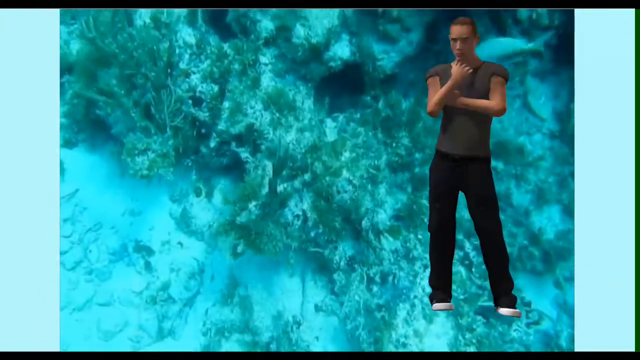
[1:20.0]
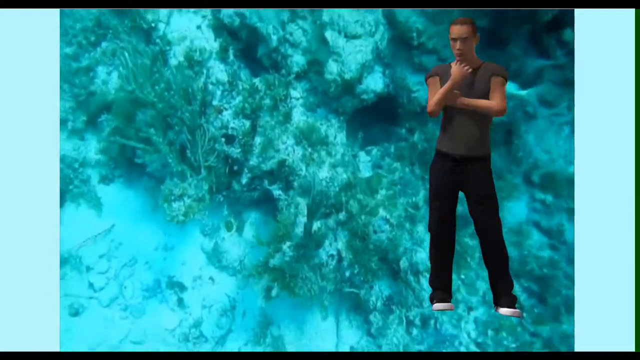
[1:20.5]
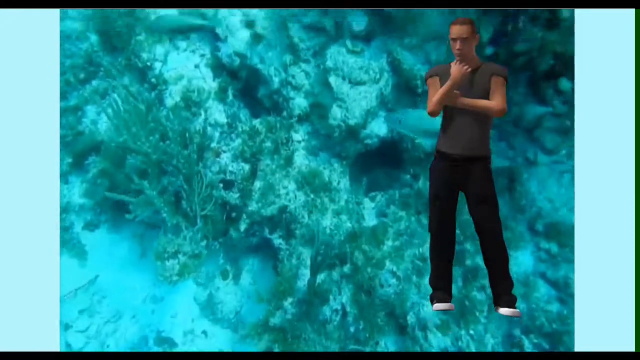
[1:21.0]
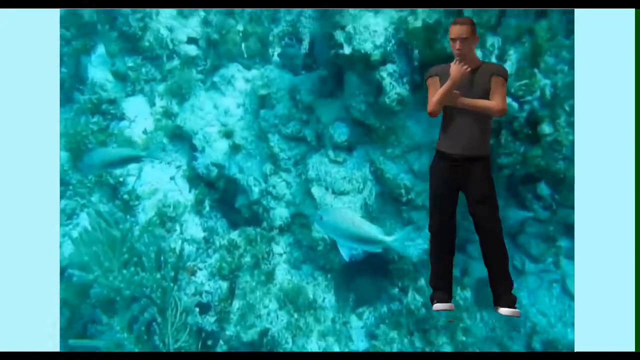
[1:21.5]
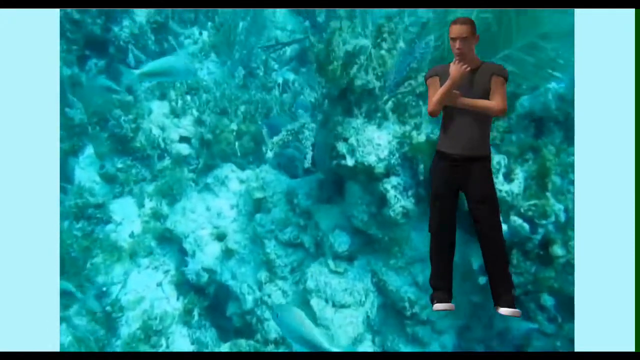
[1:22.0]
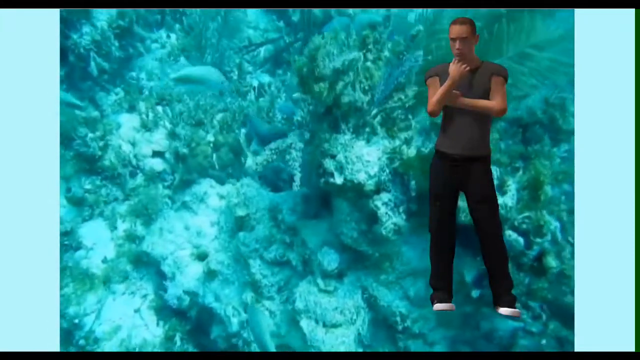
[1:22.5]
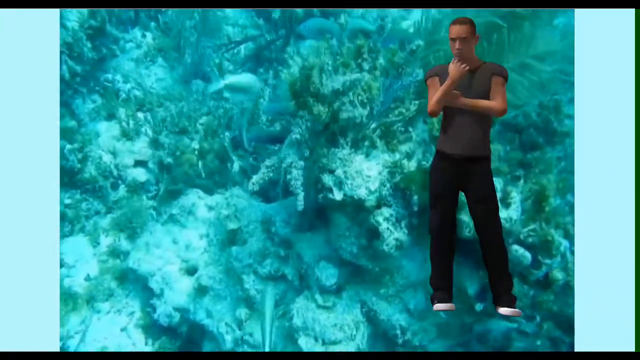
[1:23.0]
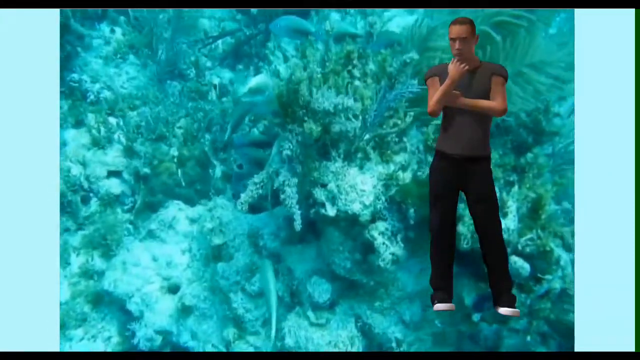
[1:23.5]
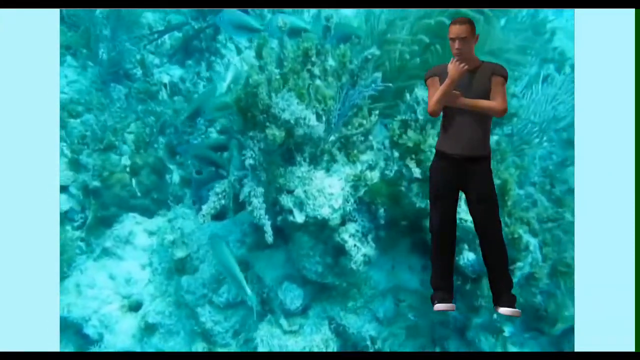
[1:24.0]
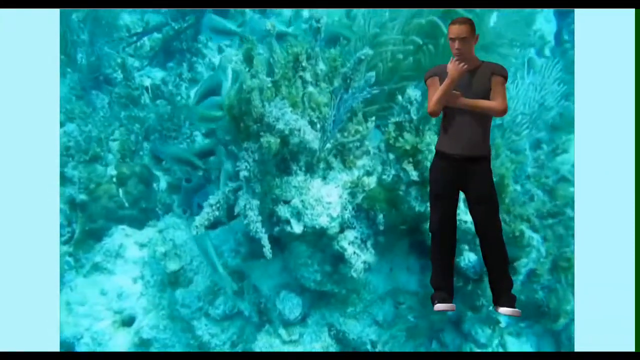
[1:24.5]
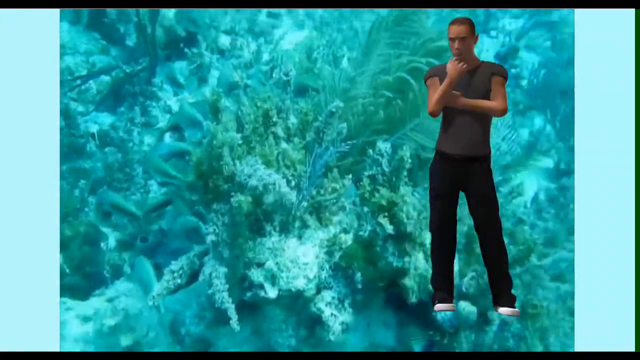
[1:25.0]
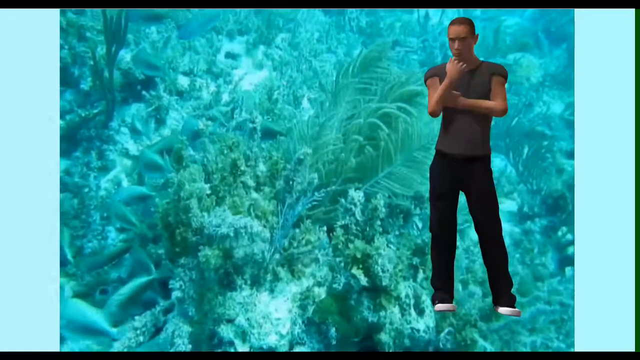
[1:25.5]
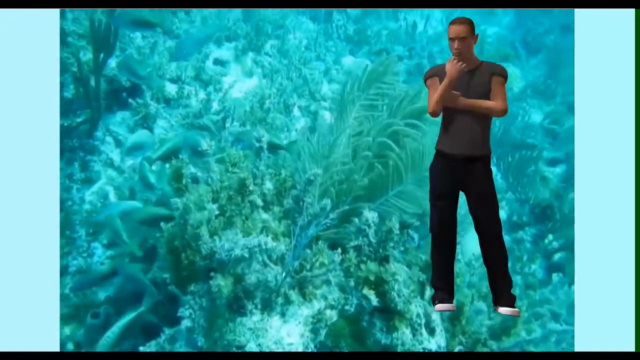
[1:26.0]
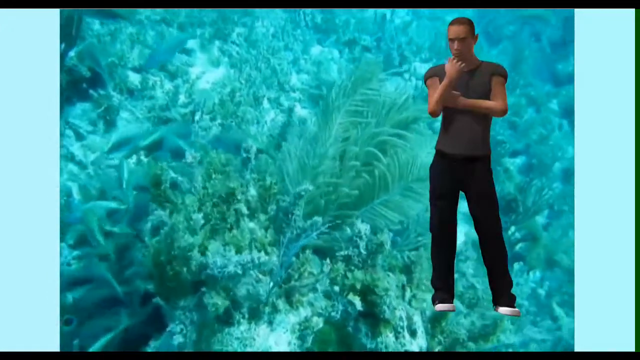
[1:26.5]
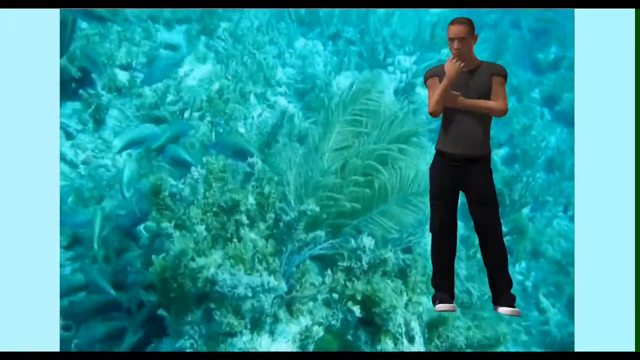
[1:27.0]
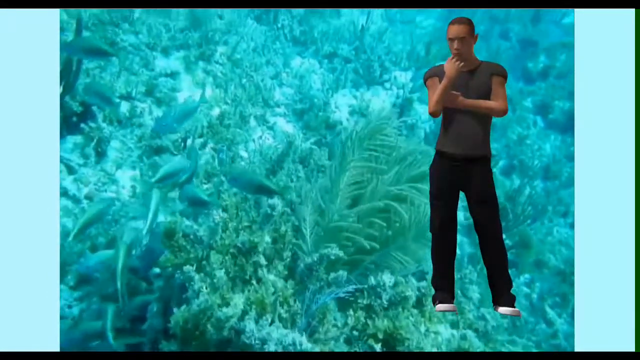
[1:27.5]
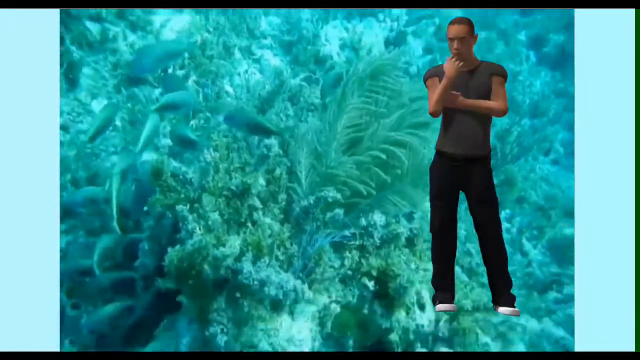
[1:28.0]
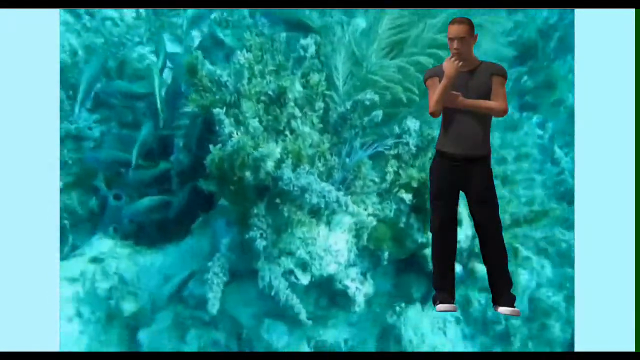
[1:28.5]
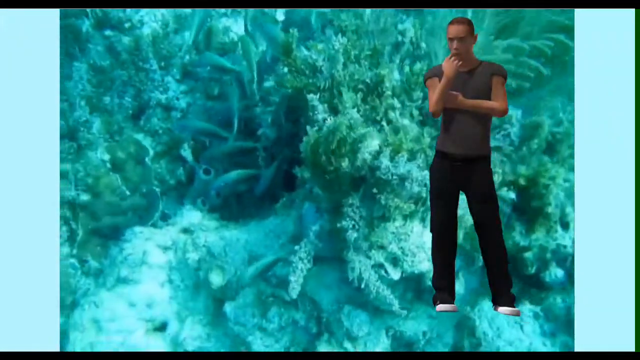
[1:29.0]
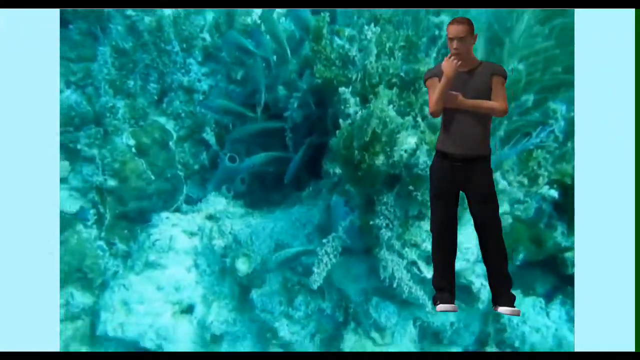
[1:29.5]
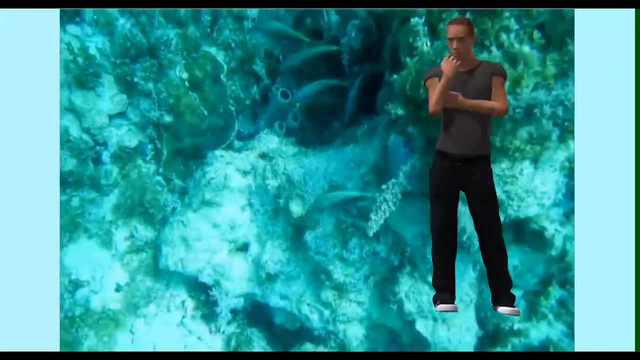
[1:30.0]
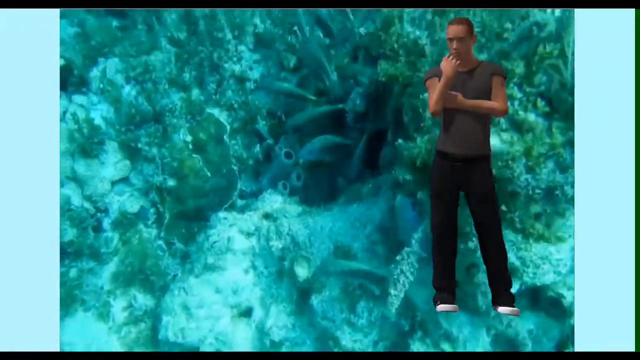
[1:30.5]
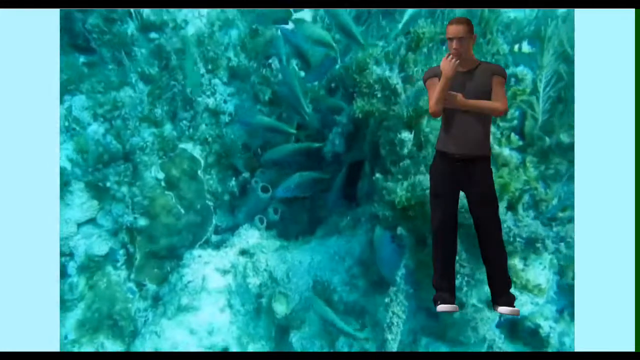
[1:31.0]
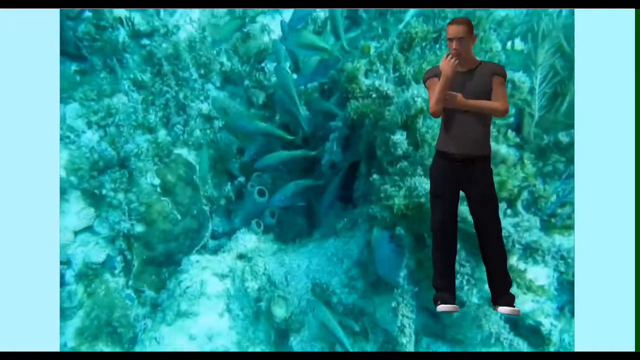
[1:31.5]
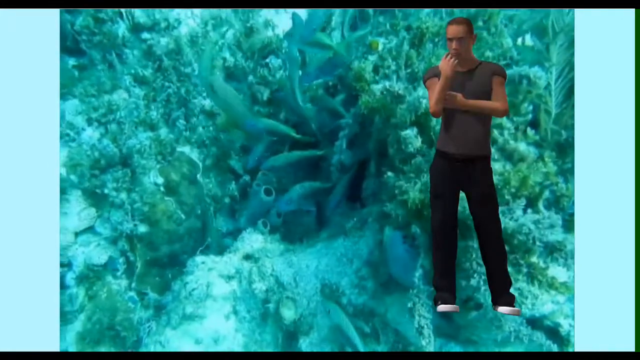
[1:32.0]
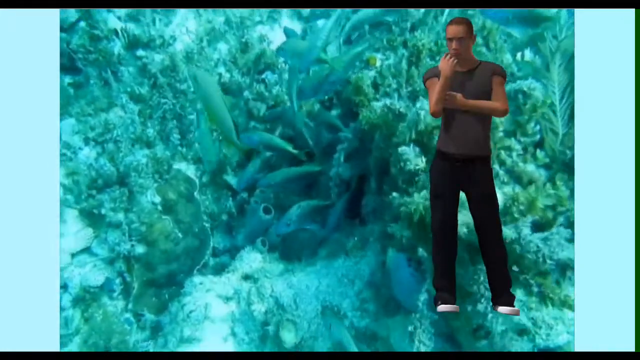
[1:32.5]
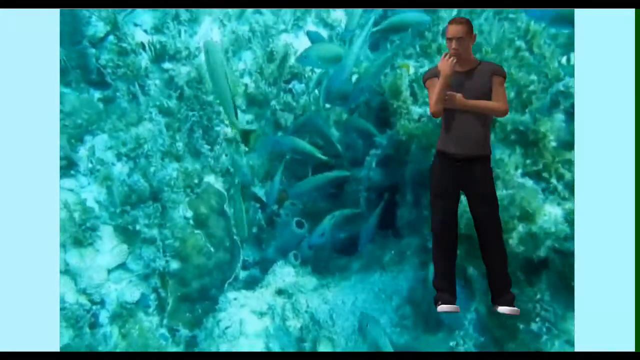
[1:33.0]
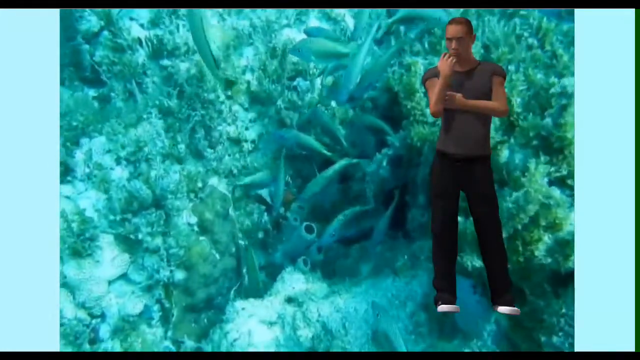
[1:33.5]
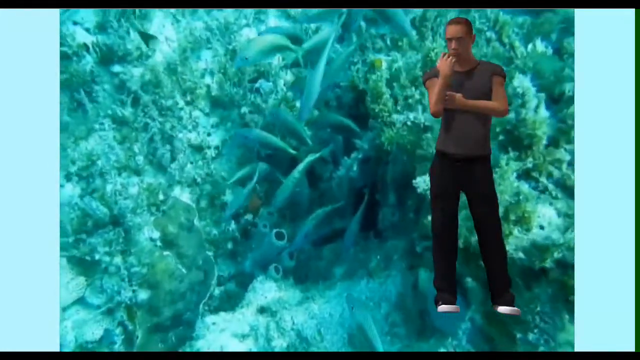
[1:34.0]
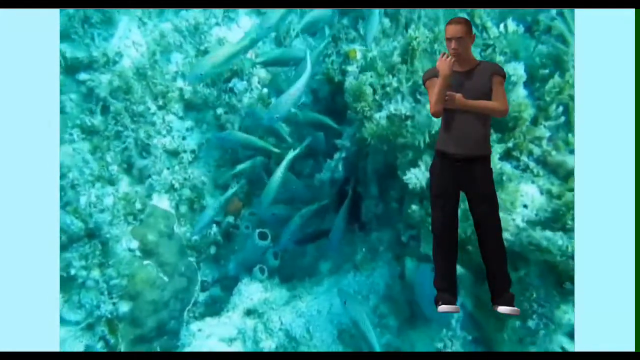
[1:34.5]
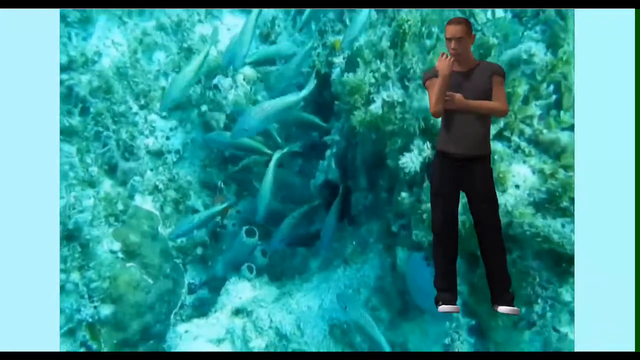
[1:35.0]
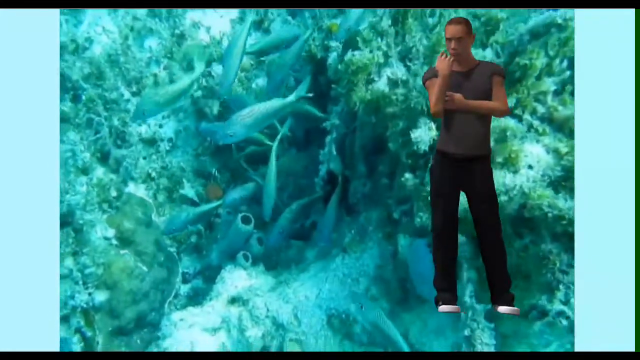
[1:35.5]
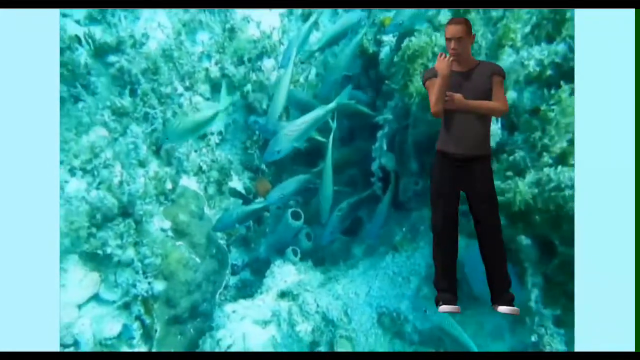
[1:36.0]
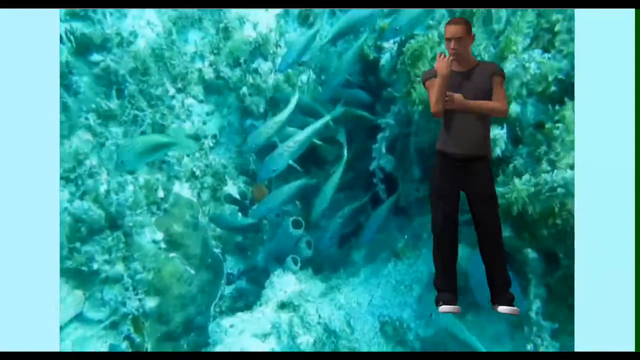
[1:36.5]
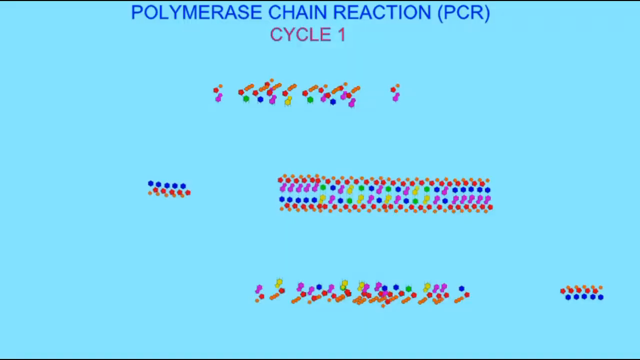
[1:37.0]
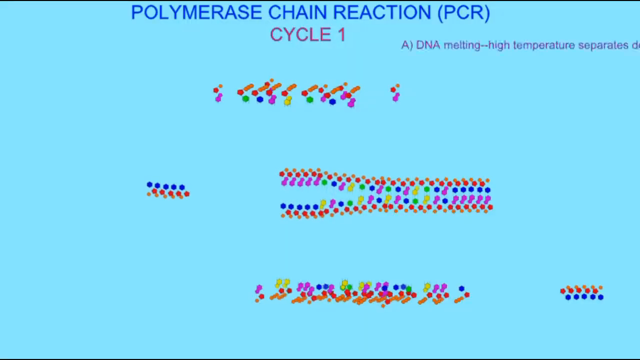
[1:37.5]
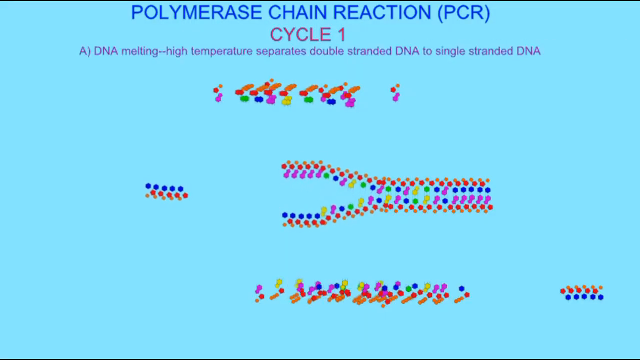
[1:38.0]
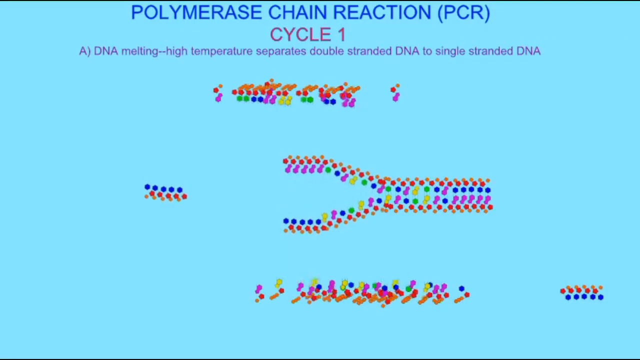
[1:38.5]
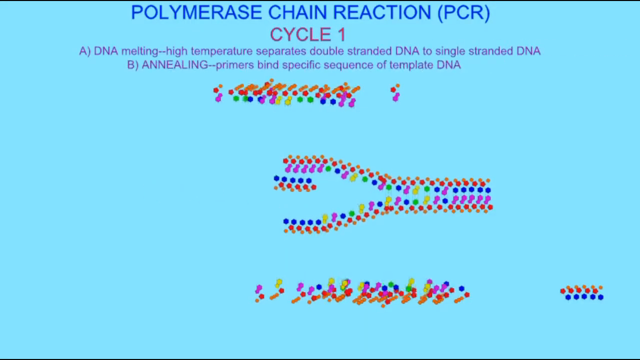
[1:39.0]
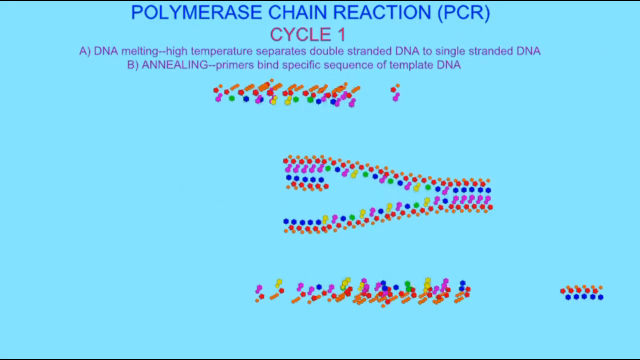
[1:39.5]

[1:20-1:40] A video of underwater fish and vegetation has an animated figure of an adult male superimposed on it. He is on the right-hand side of the screen, with his feet near the bottom and his head near the top. He wears long black pants and a short-sleeved gray shirt, has very short brown hair, and looks to have white sneakers on. His left arm is across his chest and his right arm is bent up so that his hand and fingers are near his mouth. The vegetation under the water looks like algae or weeds, with some light green colors as well as some very murky, washed-out greens. A lot of very thin fish swim in a big group near the middle of the screen among the vegetation. Then a quick light blue slide appears with words across it: at the top it says "Polymerase chain reaction (PCR)", below that "Cycle 1", and below that there is an image of DNA.